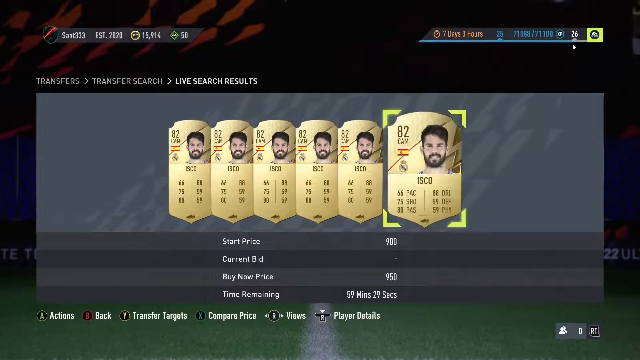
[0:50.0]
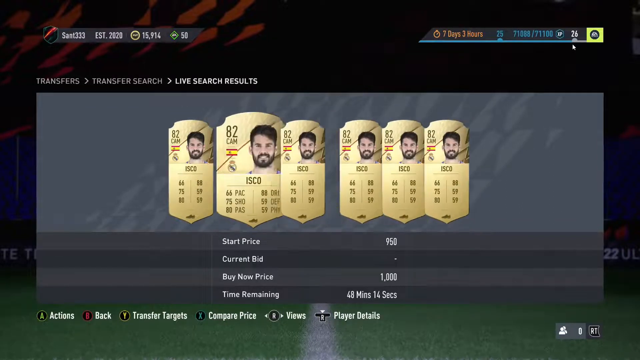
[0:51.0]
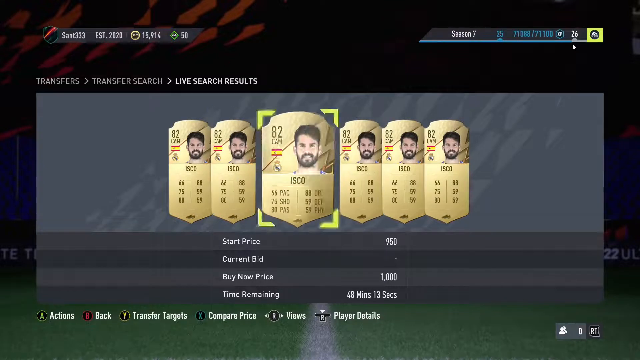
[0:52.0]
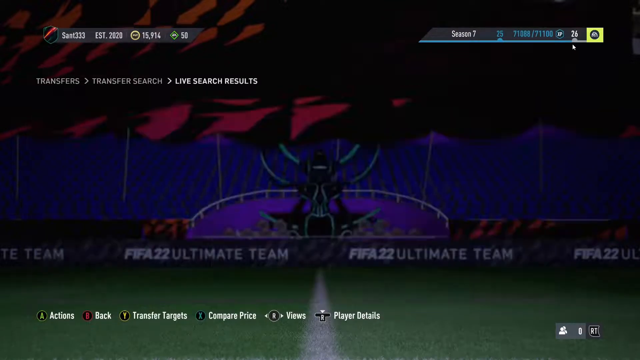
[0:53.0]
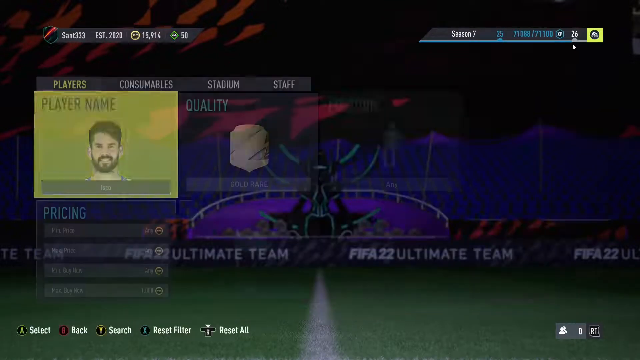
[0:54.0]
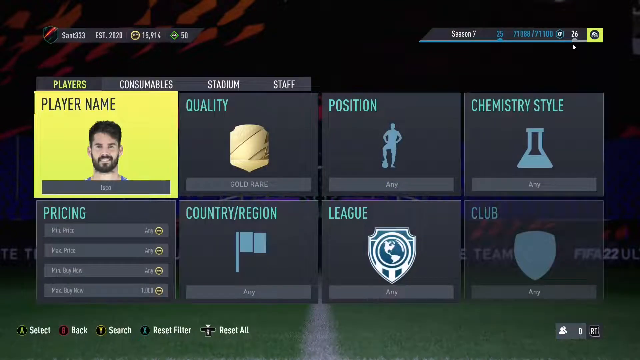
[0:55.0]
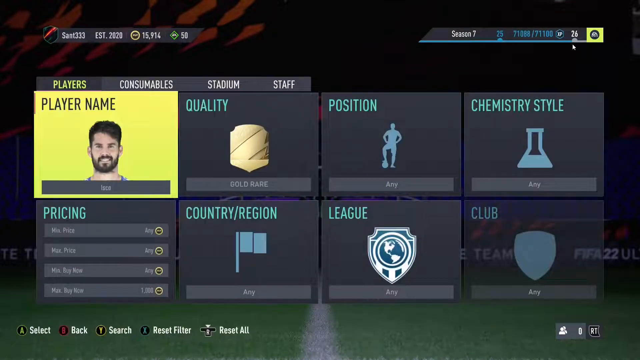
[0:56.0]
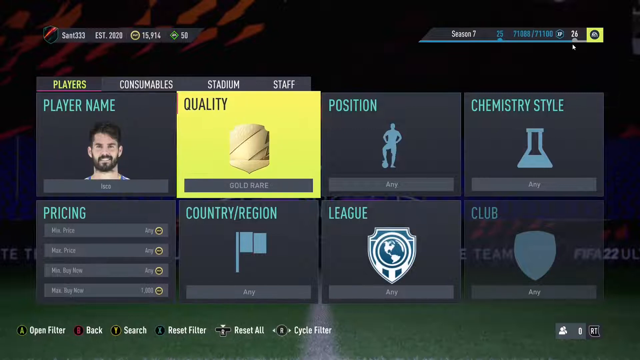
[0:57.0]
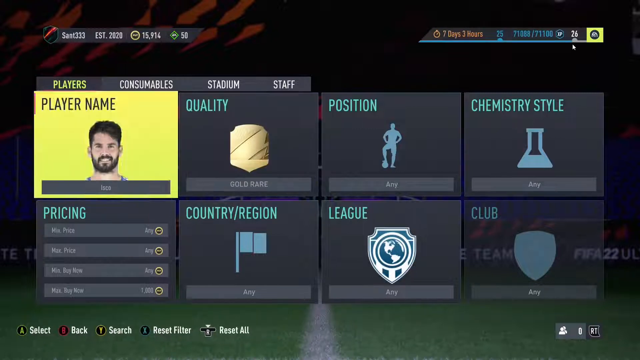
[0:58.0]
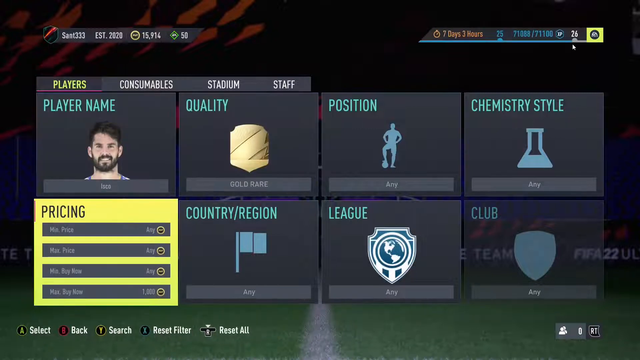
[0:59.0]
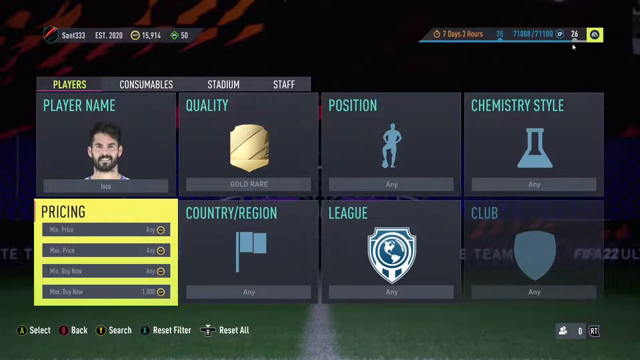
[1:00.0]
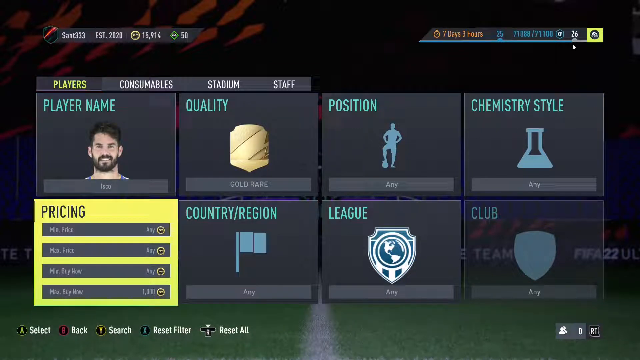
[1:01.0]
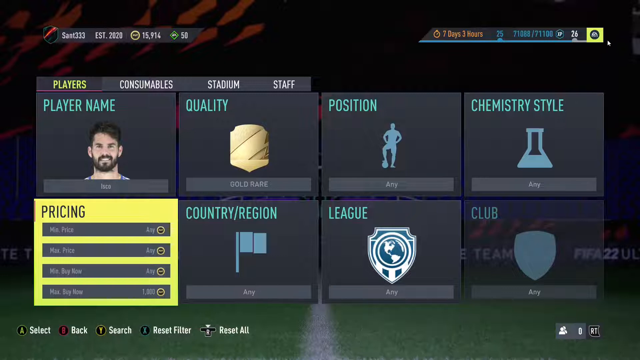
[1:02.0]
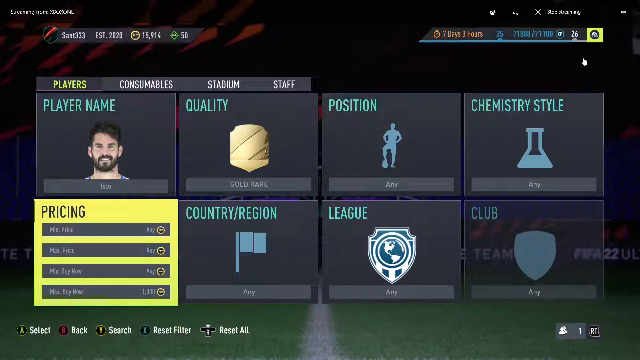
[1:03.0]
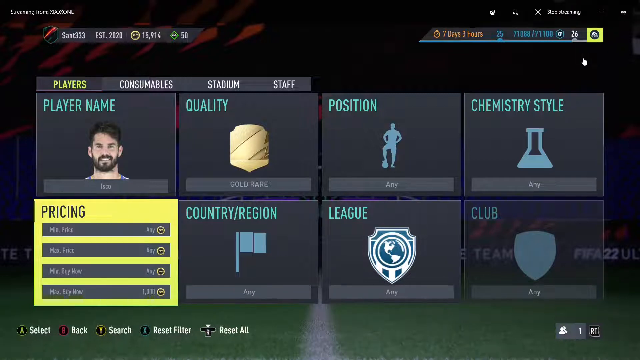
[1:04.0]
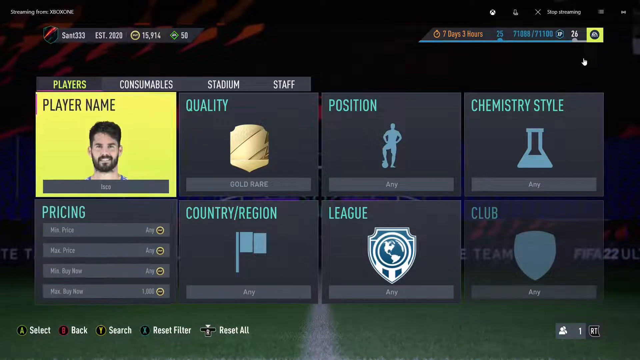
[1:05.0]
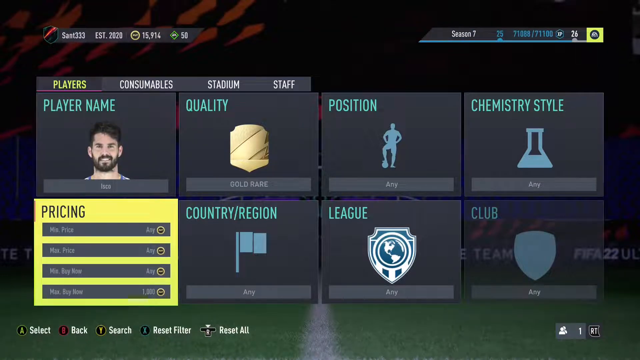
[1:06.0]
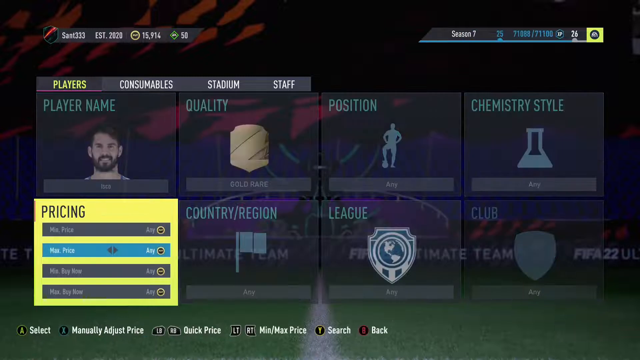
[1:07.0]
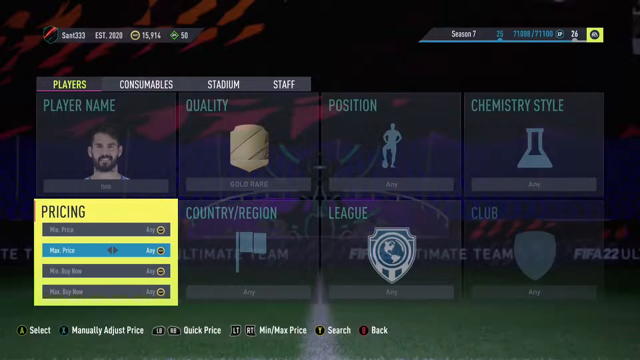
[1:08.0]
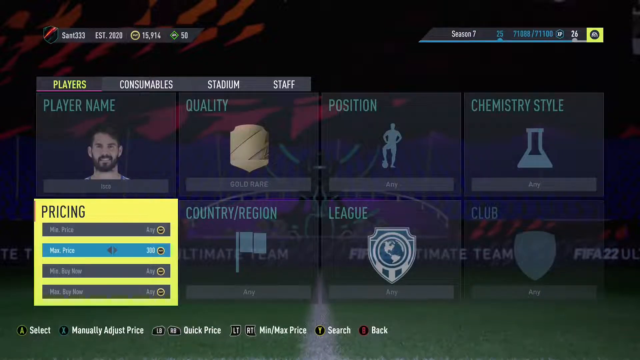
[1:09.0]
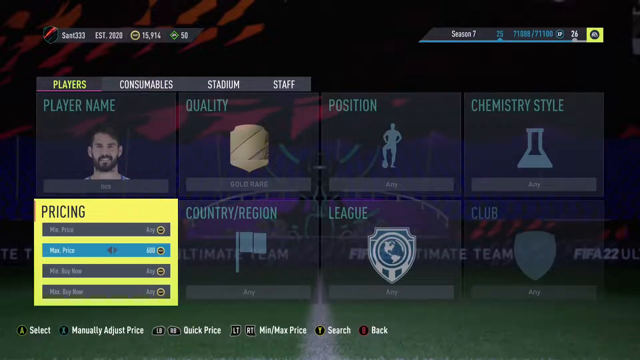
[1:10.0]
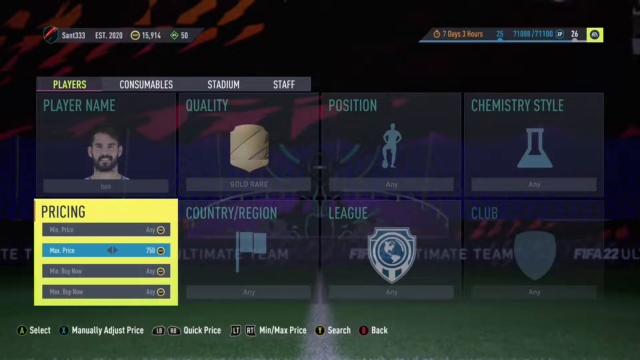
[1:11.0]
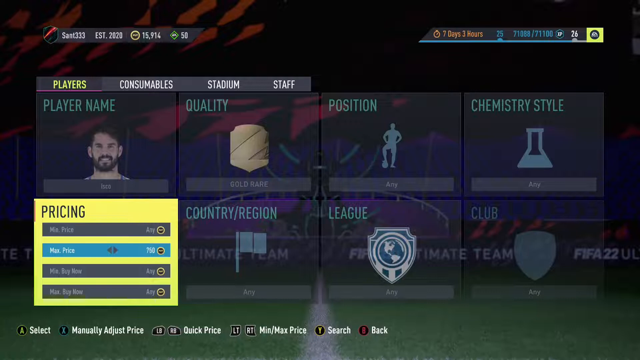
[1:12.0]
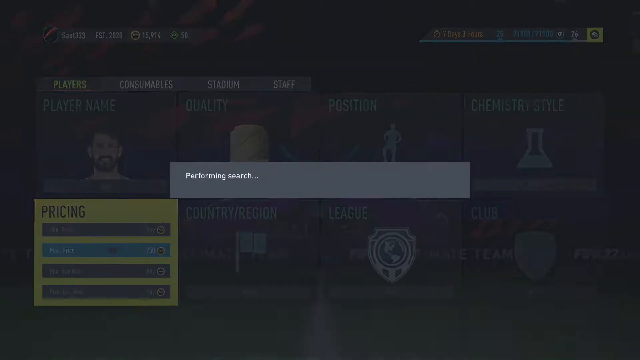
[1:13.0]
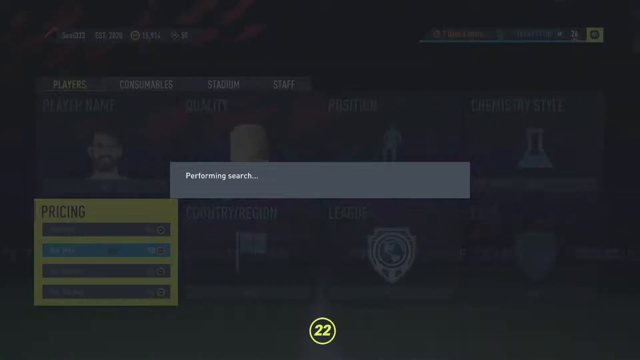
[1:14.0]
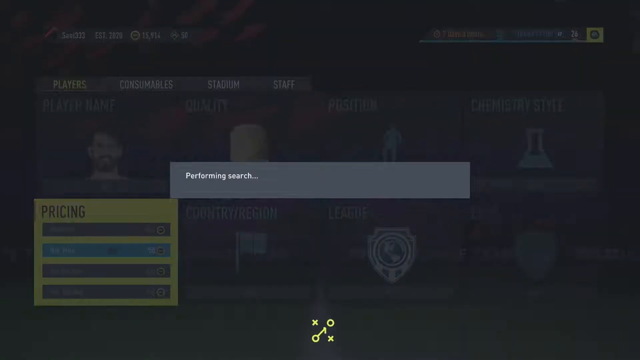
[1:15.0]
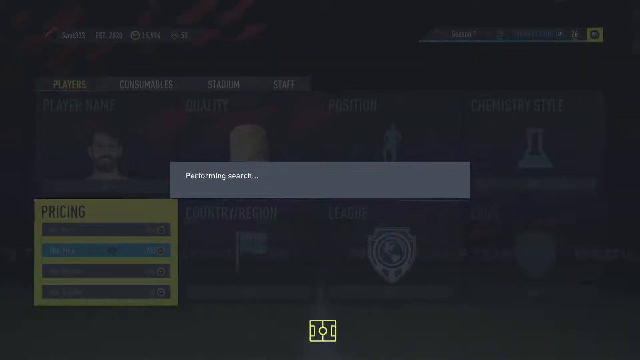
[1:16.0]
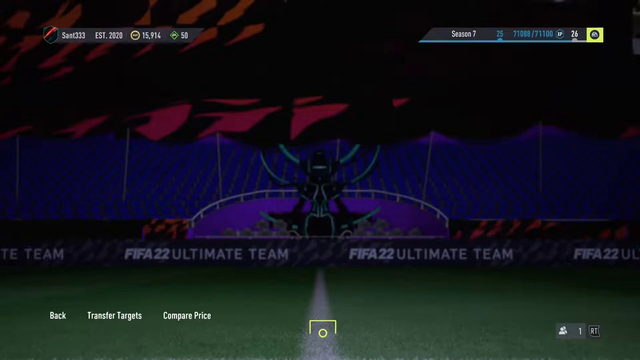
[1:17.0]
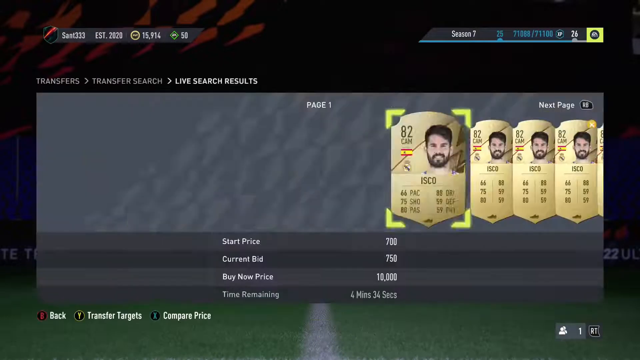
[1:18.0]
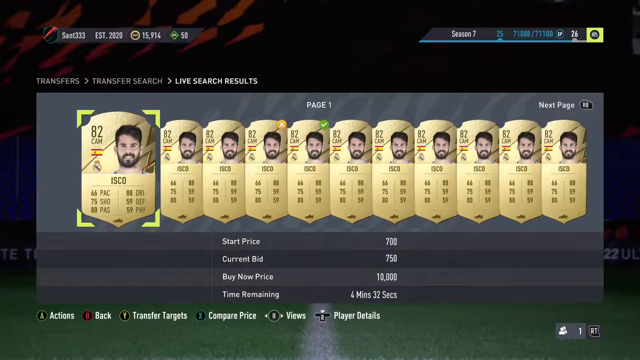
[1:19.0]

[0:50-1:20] The view focuses on the row of cards. They are all gold and show a player presumably named Isco. The cards are scrolled through, then the view briefly backs out to the auction block menu. As it backs out, the game's background is visible, showing that the game is FIFA 22 and the game mode is called Ultimate Team. The menu is scrolled through, and a search based on pricing appears to be performed. The view goes back into the search results page, and bids appear to be placed on the cards. This appears to be a basic overview of how to use the auction system to purchase cards in Ultimate Team.